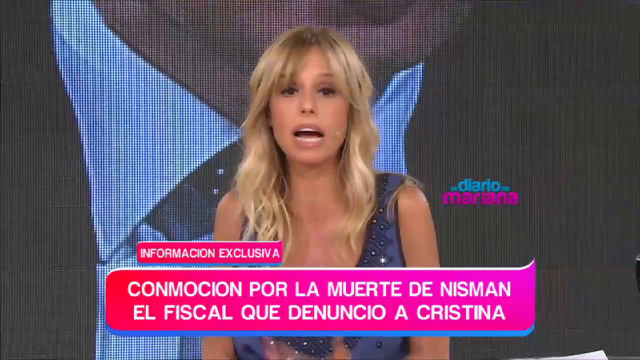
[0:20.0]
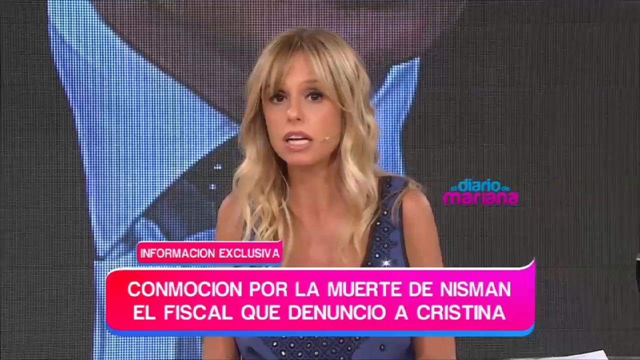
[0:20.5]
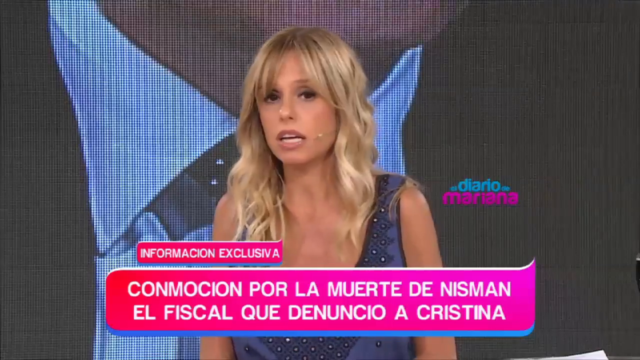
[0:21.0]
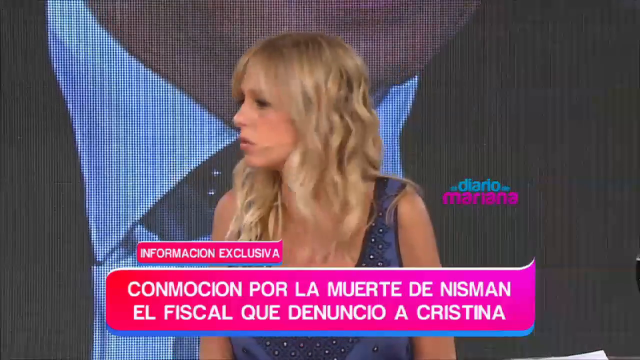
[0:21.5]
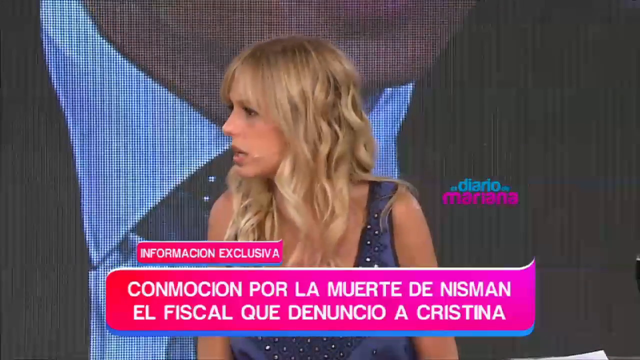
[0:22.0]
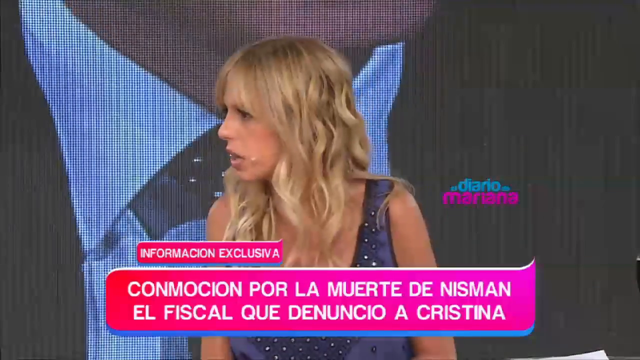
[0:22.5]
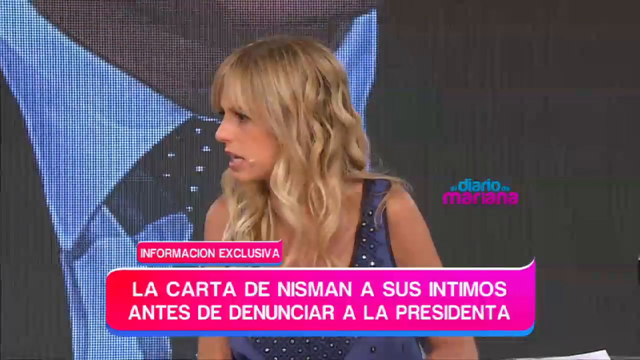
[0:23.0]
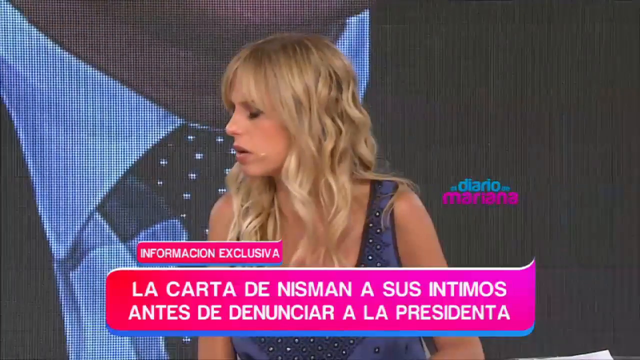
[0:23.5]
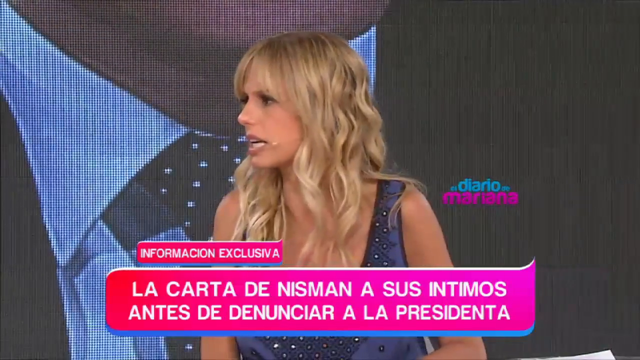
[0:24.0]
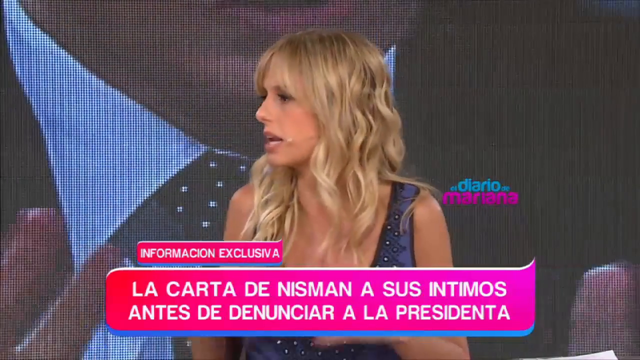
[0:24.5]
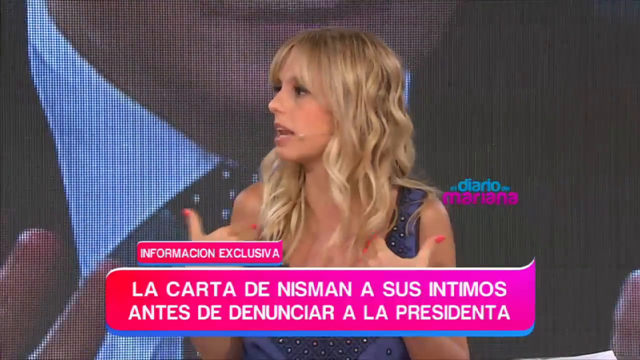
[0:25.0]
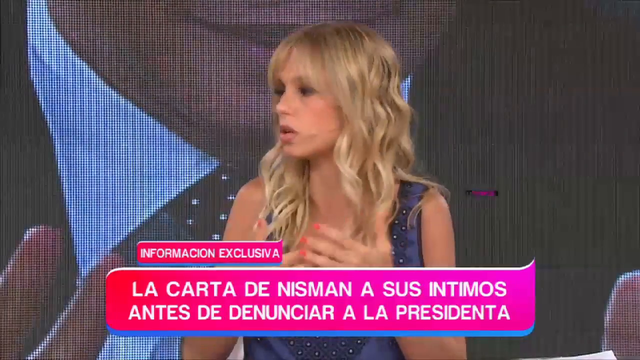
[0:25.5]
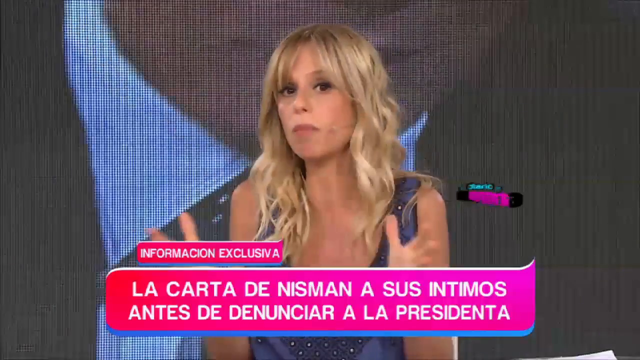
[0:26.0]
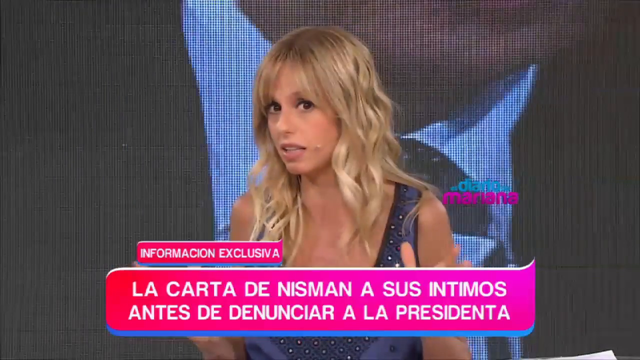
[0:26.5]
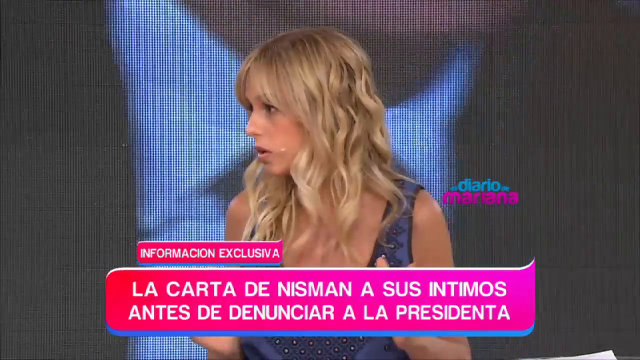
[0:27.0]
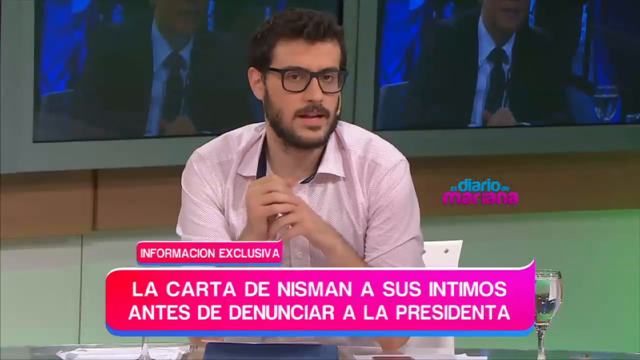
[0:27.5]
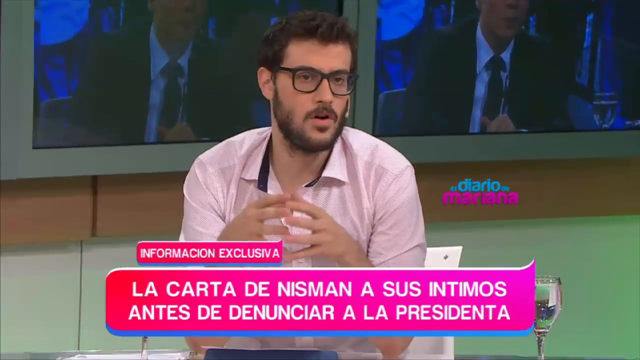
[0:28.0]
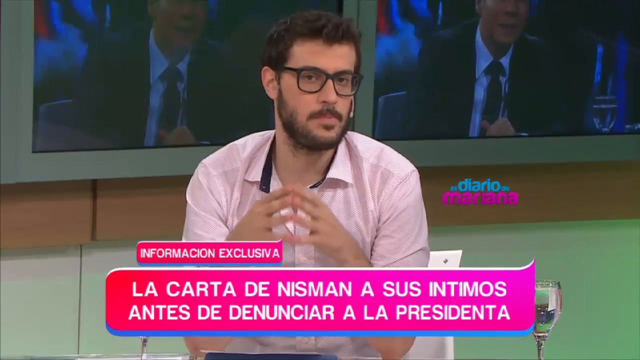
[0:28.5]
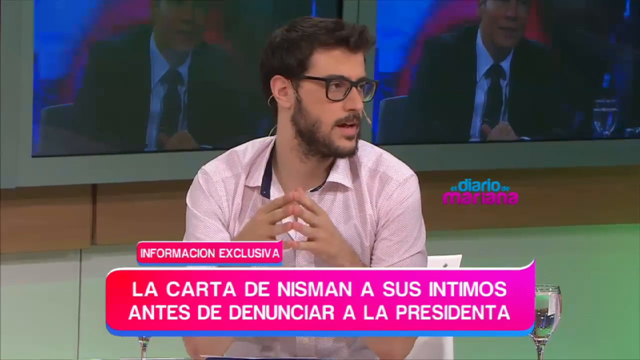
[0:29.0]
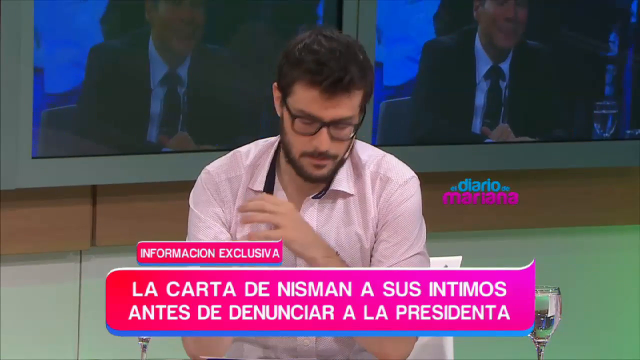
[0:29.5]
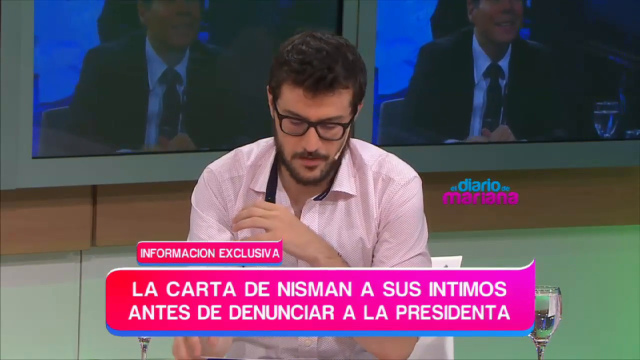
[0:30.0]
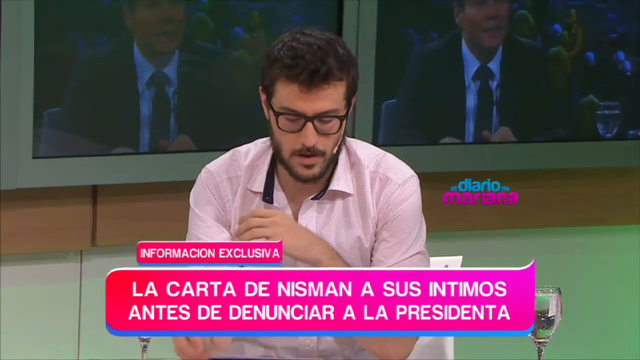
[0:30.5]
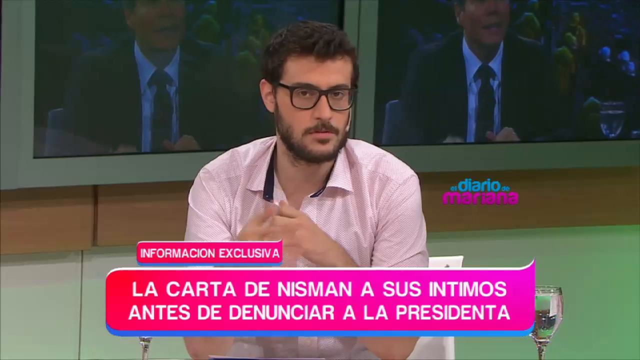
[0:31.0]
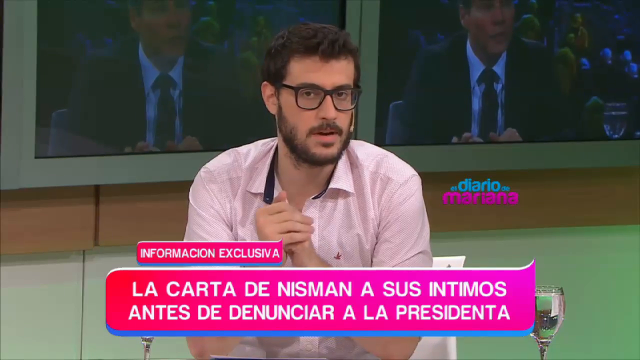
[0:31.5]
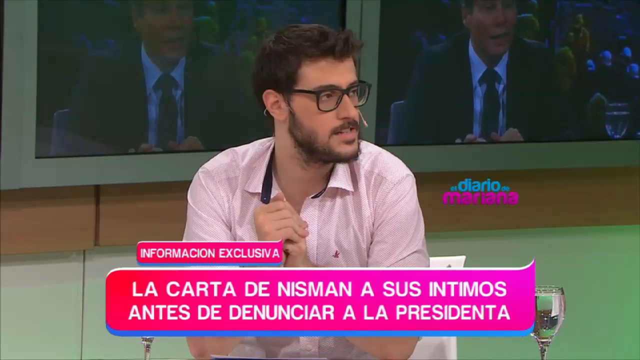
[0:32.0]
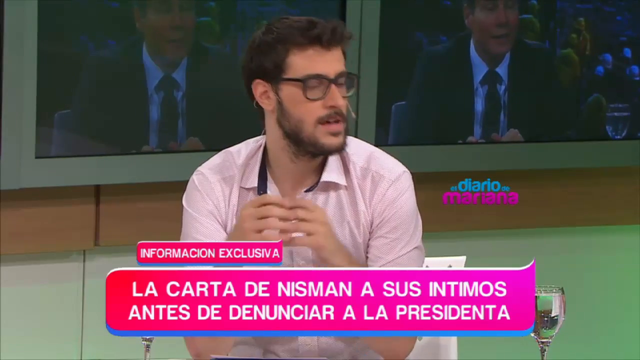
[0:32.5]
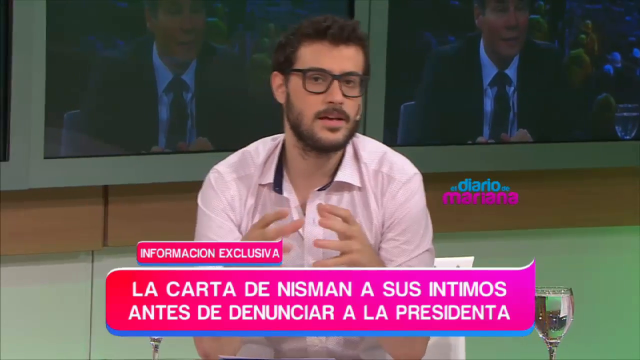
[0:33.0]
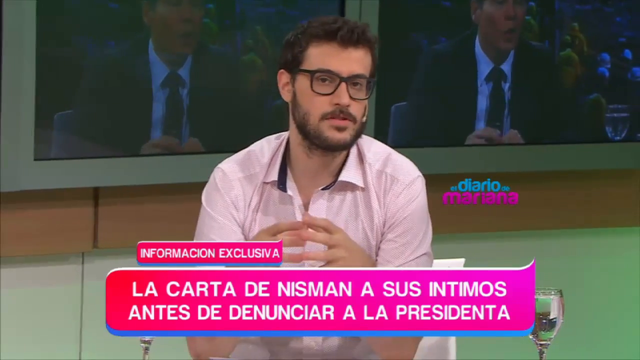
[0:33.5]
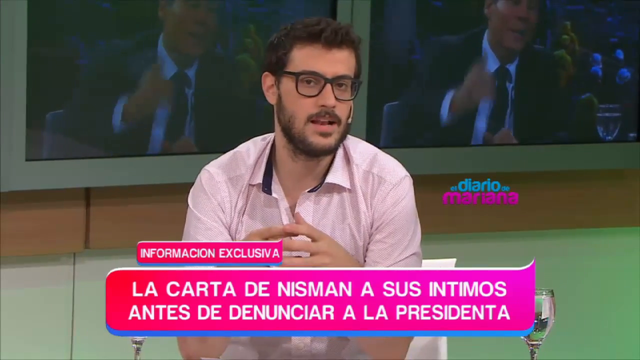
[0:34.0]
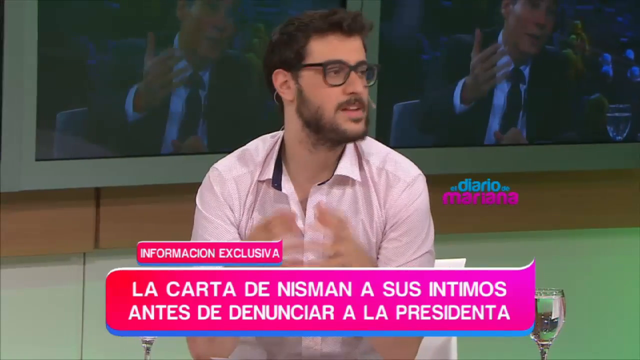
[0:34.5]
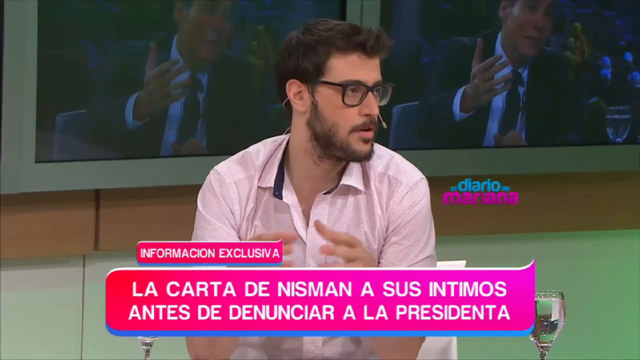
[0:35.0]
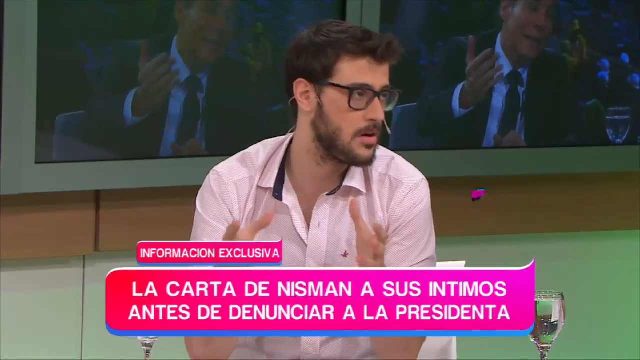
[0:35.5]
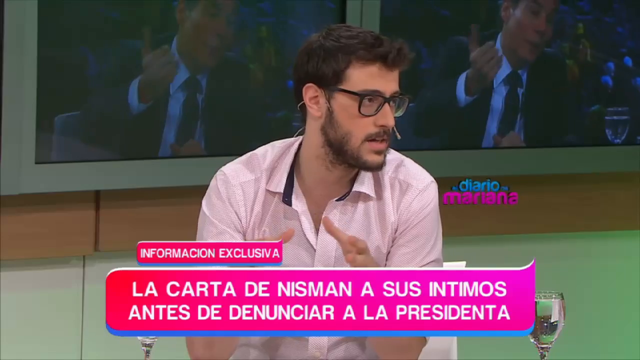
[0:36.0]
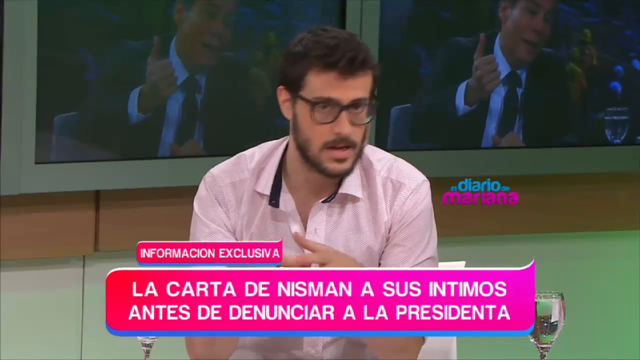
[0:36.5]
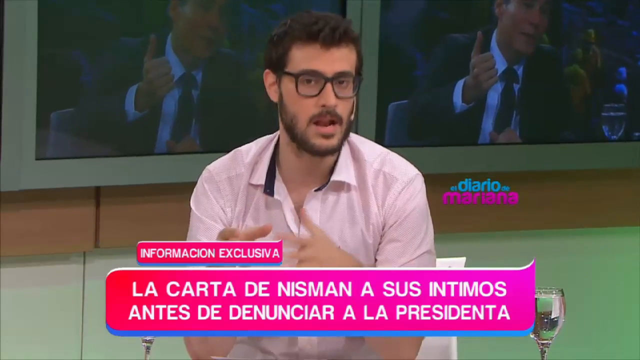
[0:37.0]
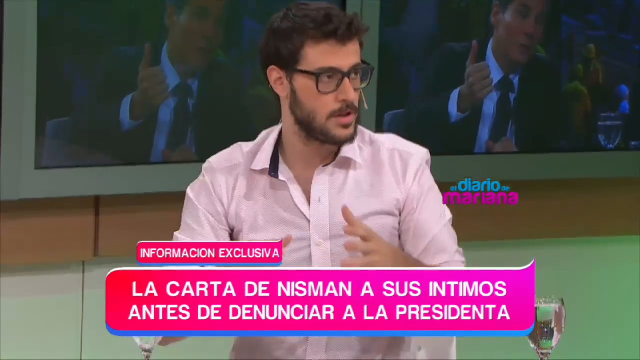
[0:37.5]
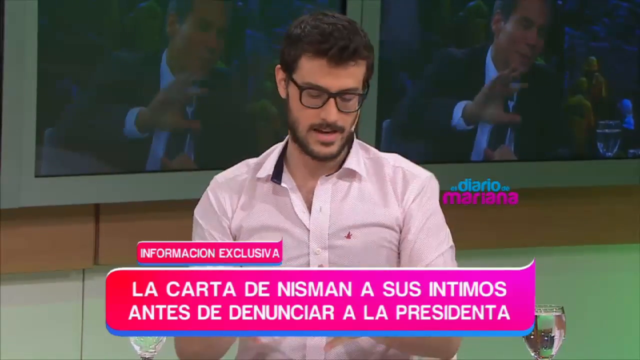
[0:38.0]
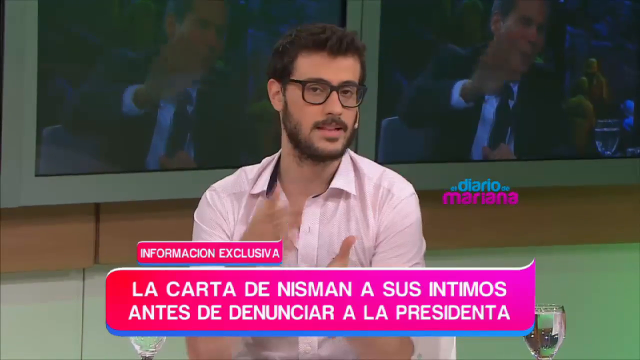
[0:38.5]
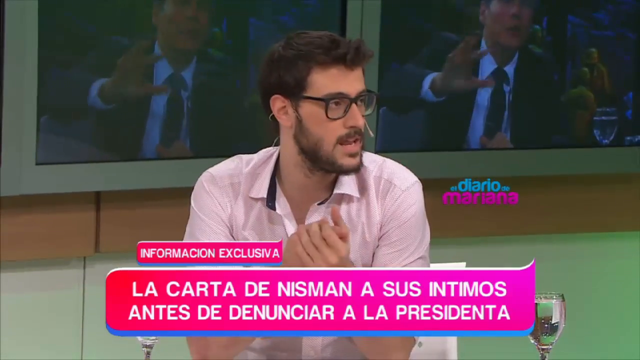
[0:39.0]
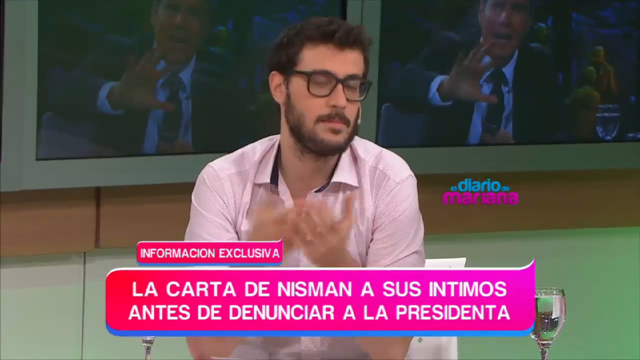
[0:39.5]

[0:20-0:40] The woman talks, turning her head to look to the left as she continues speaking. The captions at the bottom change and mention something about a president. She keeps looking to the left and uses her hands as she talks, then looks toward the camera, then back to the left. The scene changes to a man sitting down and talking with his hands up in front of him. He wears eyeglasses with black frames and has a lot of facial hair, with a beard and a mustache, and apparently short dark brown hair. He looks at the camera while talking, then to the right, then down as he continues to talk, then at the camera again, to the right again, and back at the camera. In the background behind him are two screens showing a man in a suit who is speaking. The man on the set keeps alternating, looking to the right to talk to the woman and then looking at the camera.